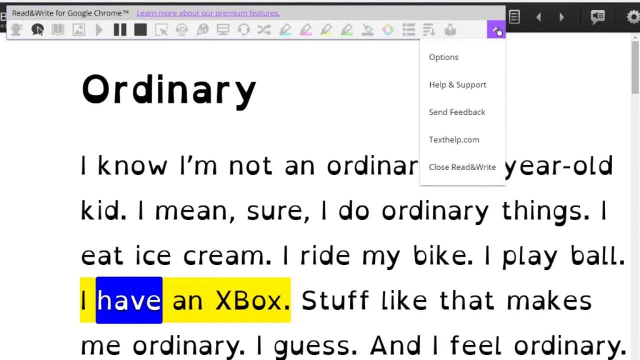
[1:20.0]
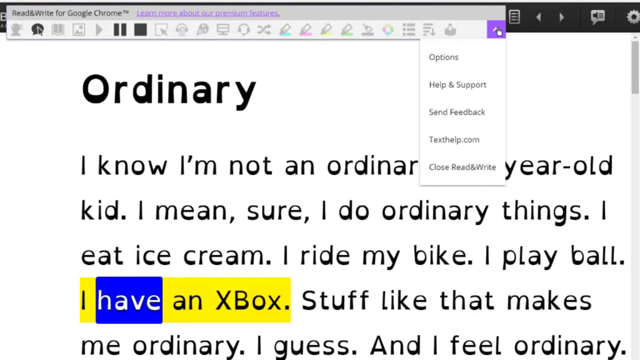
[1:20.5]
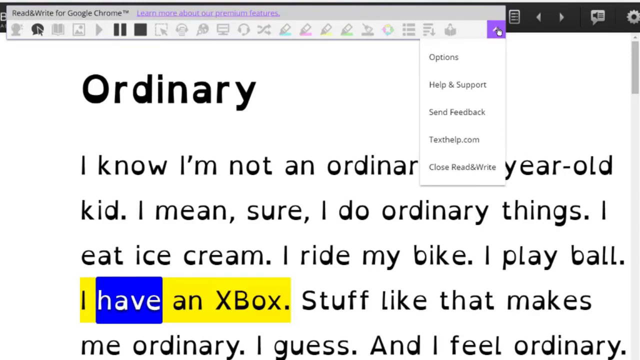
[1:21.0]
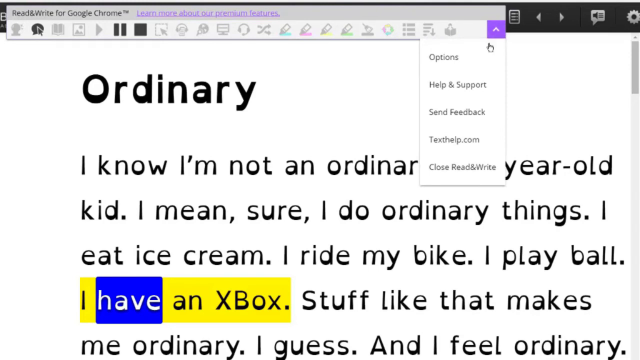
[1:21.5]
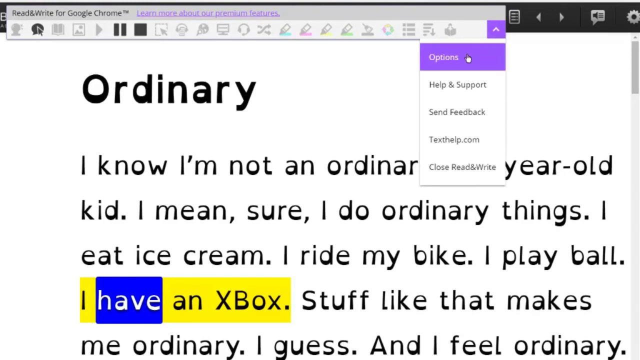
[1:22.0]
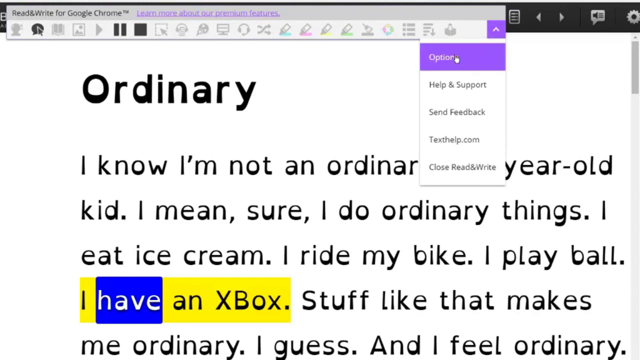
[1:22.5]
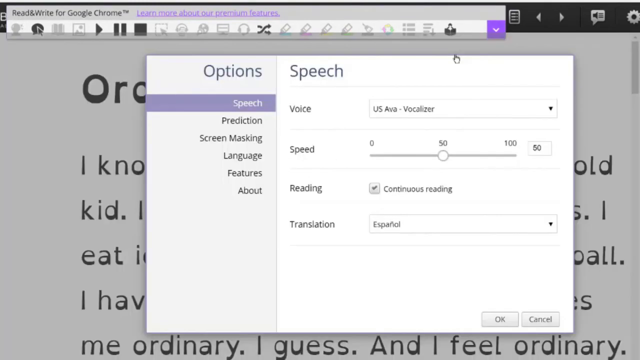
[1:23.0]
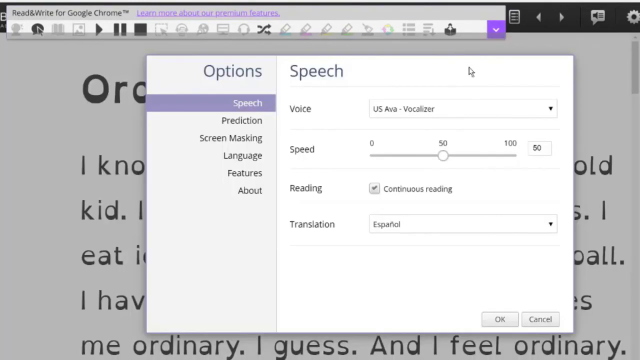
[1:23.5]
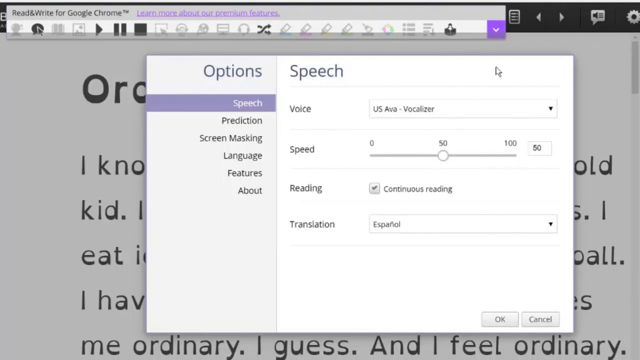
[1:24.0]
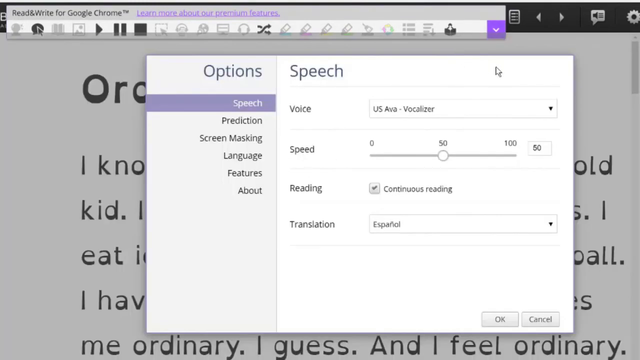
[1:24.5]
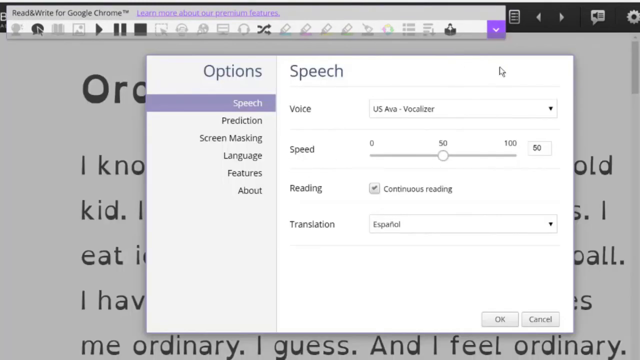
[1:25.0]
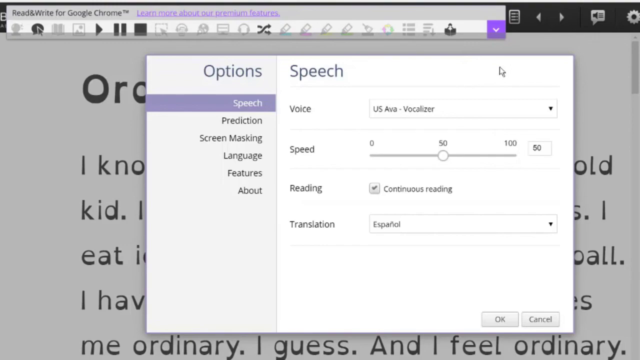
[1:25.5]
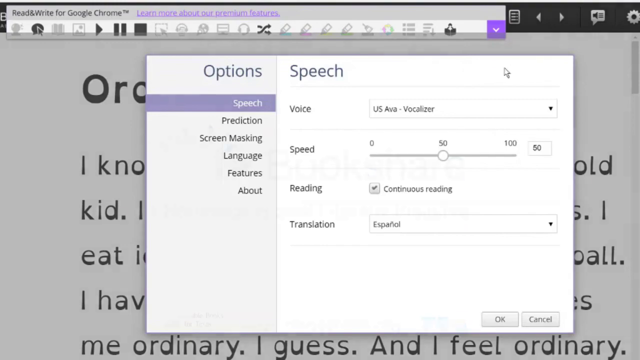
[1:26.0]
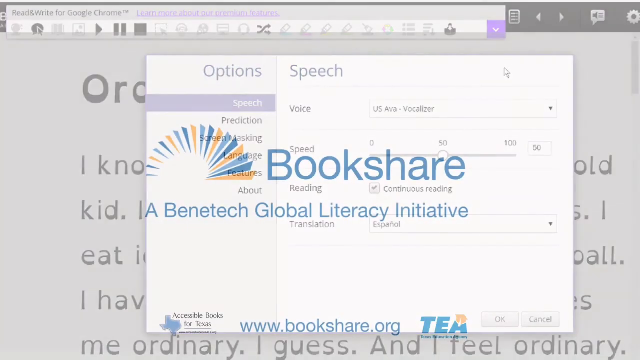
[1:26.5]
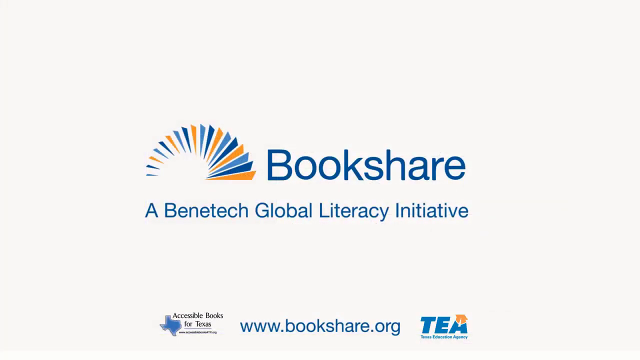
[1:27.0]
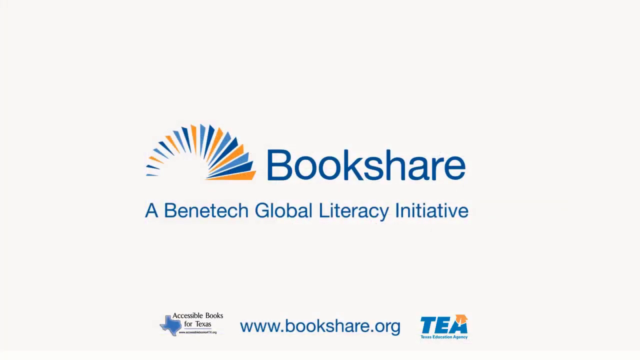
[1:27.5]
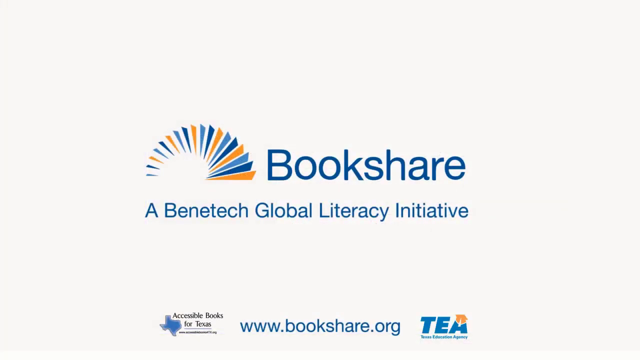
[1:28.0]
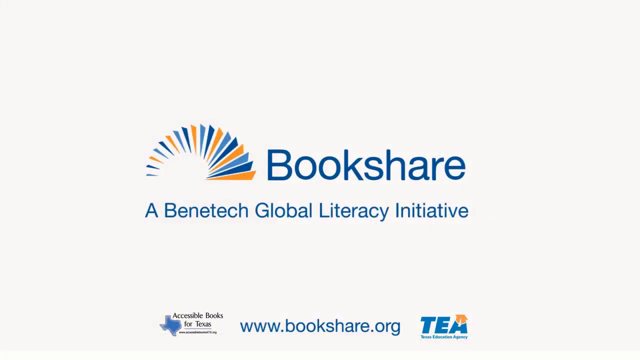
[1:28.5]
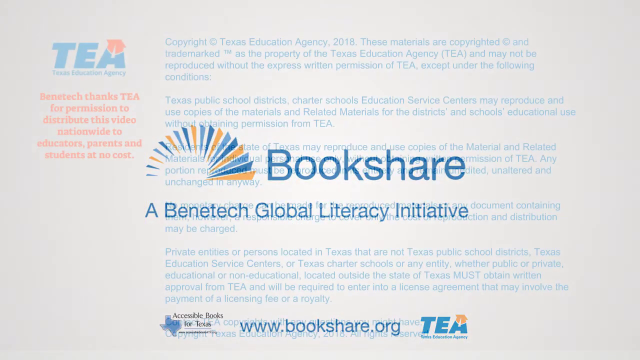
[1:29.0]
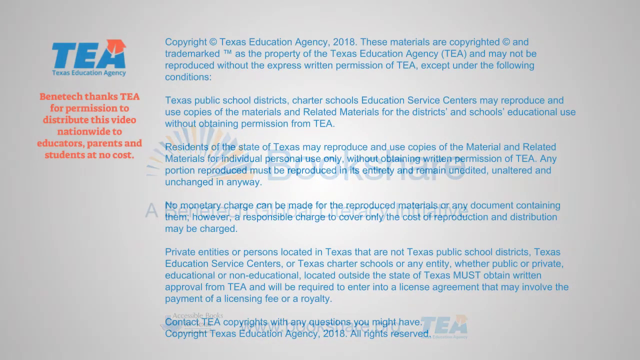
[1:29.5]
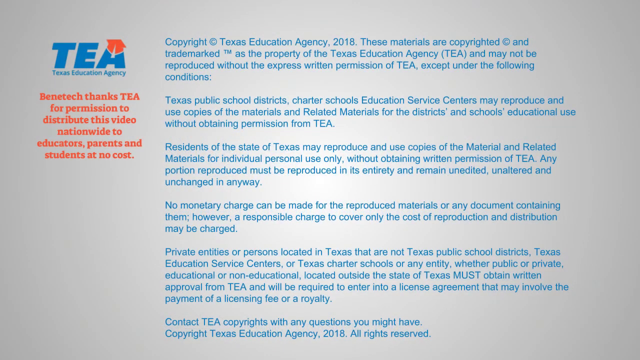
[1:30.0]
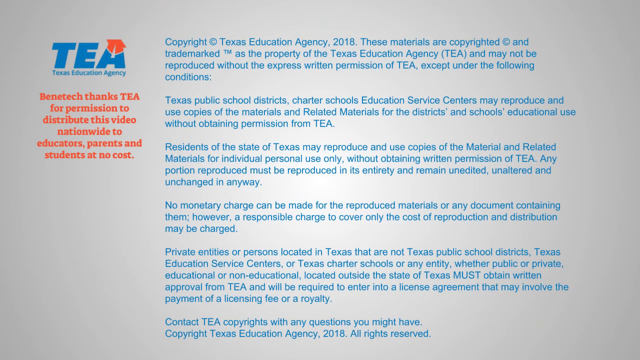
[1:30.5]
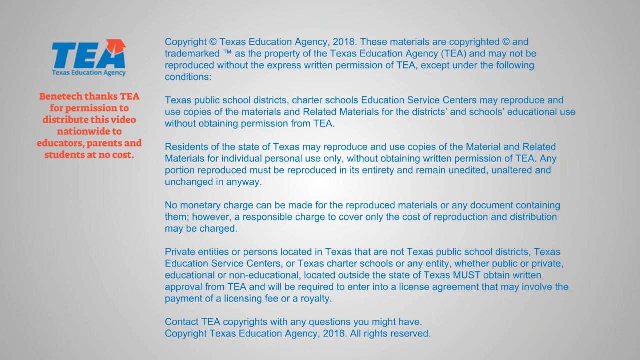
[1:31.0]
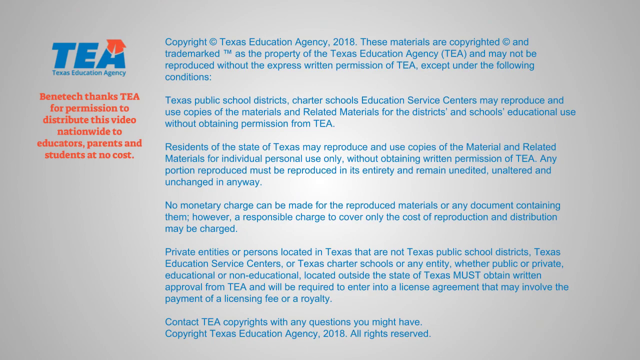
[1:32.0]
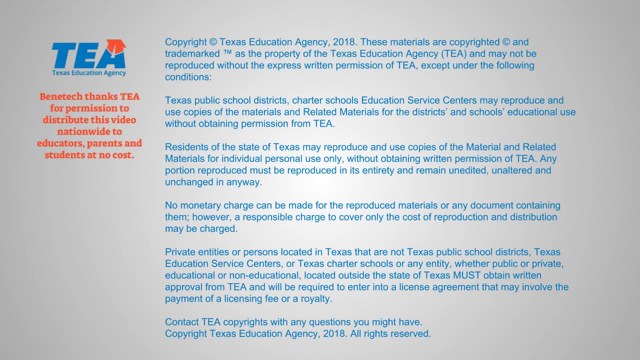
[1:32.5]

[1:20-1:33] A drop-down menu for the Read&Write for Google Chrome extension opens, revealing five more options: Options, Help and Support, Feedback, TextHelp.com, and an option to close the extension. The user hovers over Options and opens it, showing further options such as Speech, Prediction, Screen Masking, Language, Features, and About. Under Speech there are options to change the voice, change the reading speed, switch between continuous and non-continuous reading, and change the translation between multiple languages. The scene then transitions to the Bookshare splash logo once again, with text underneath in blue reading "a Benetech Global Literacy Initiative," and sponsors at the bottom of the page such as Accessible Books for Texas, www.bookshare.org, and TEA Texas Education Agency.